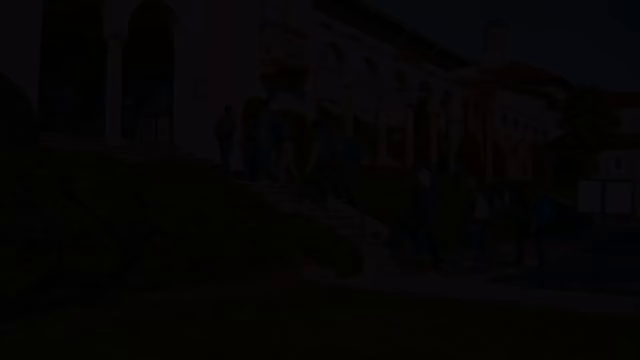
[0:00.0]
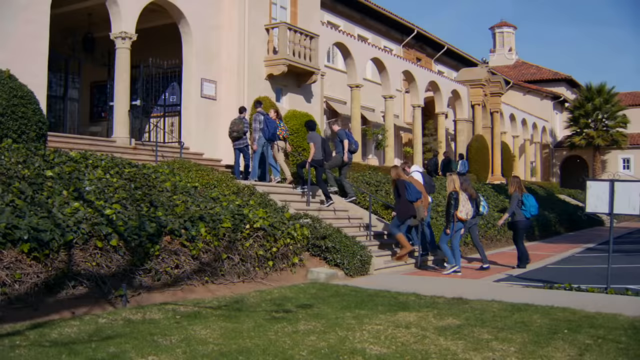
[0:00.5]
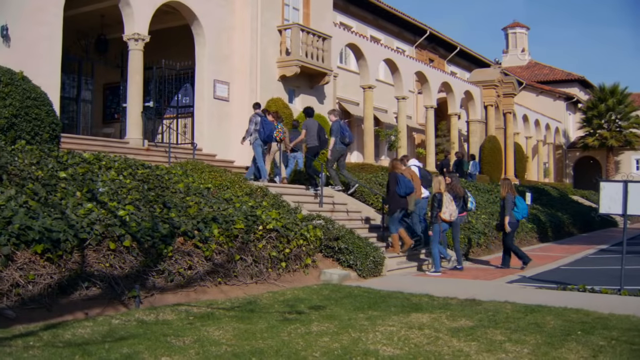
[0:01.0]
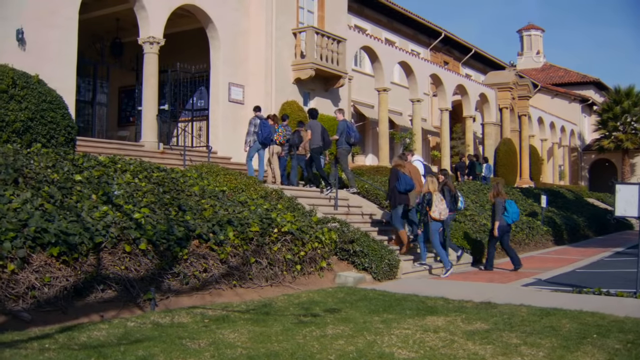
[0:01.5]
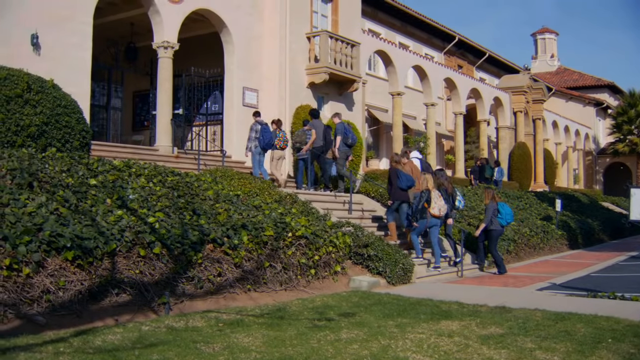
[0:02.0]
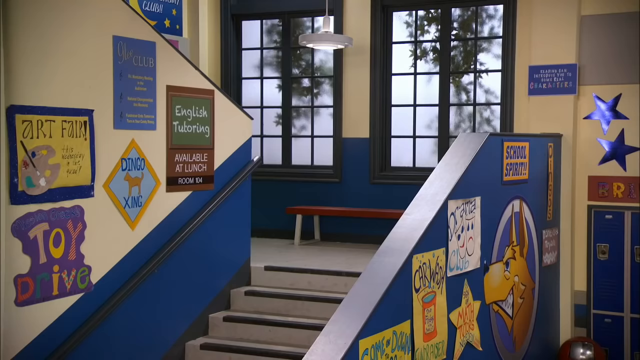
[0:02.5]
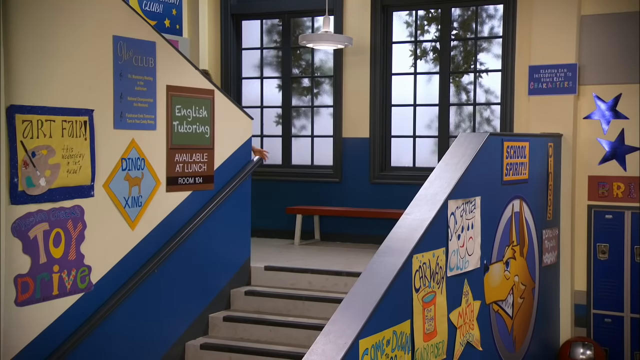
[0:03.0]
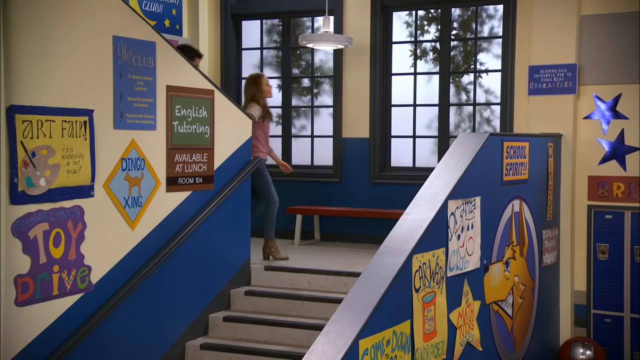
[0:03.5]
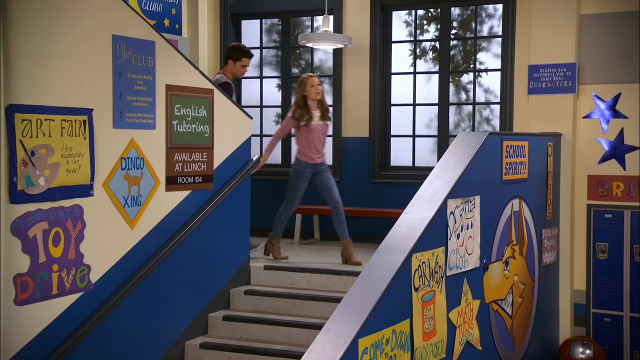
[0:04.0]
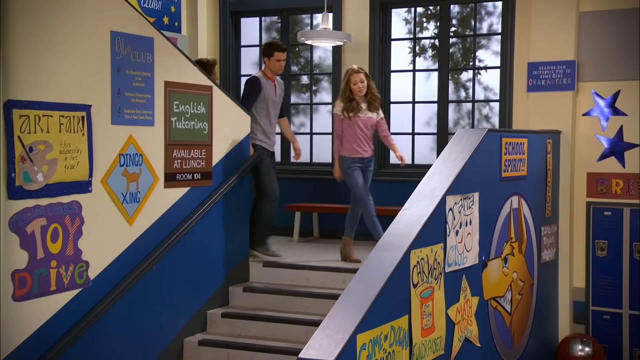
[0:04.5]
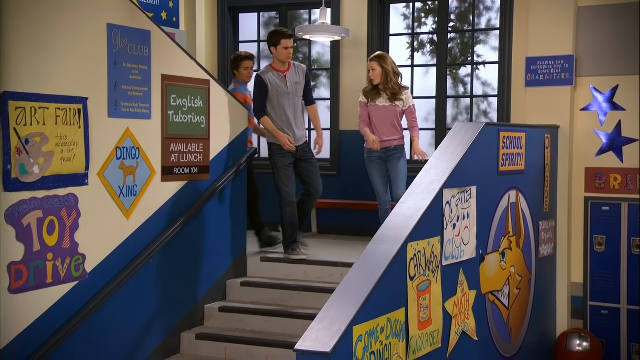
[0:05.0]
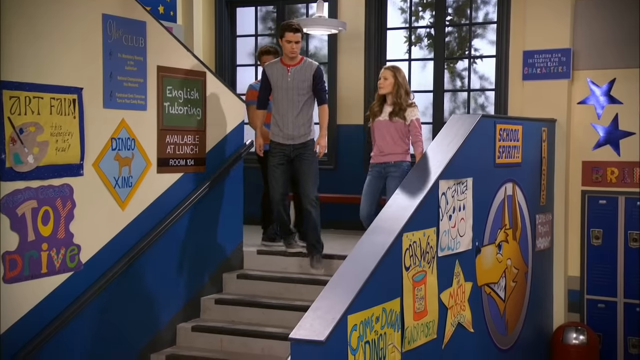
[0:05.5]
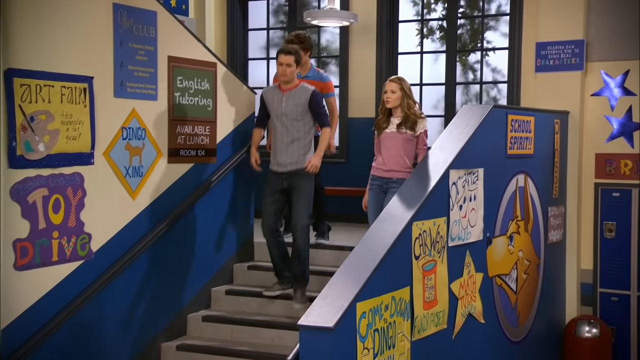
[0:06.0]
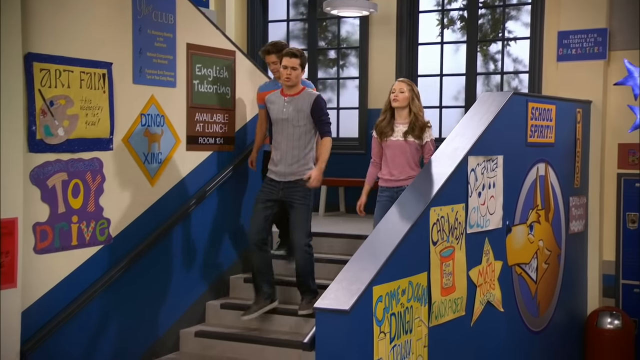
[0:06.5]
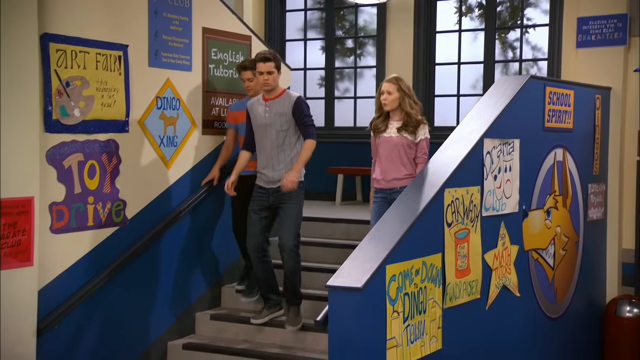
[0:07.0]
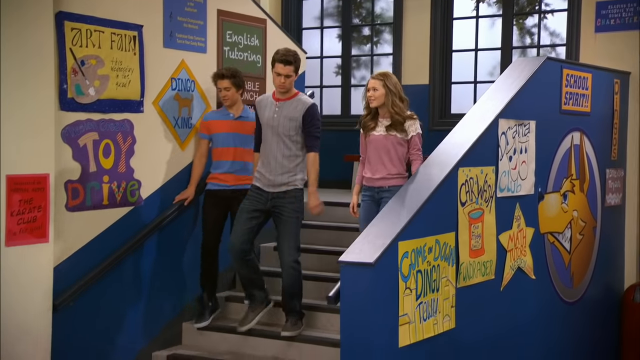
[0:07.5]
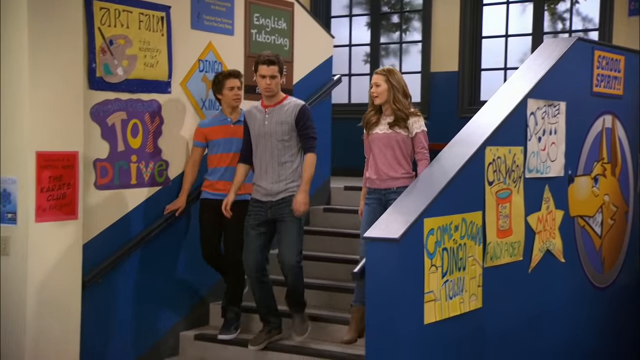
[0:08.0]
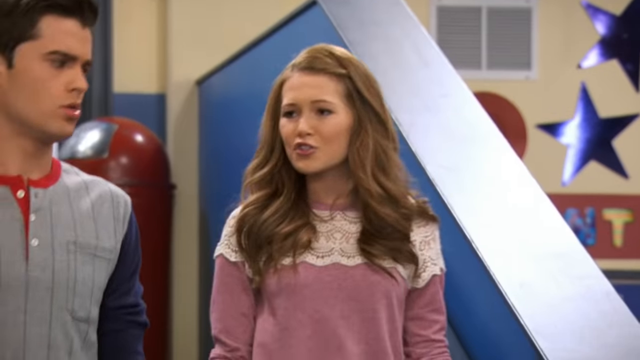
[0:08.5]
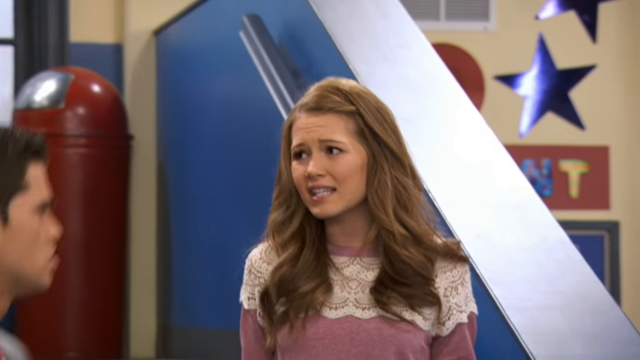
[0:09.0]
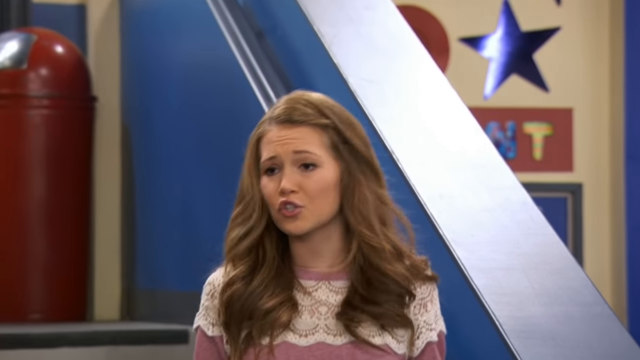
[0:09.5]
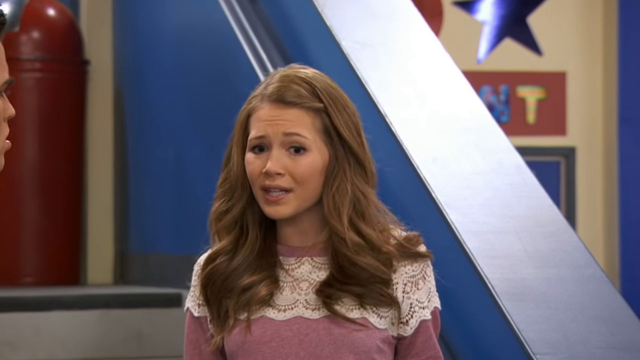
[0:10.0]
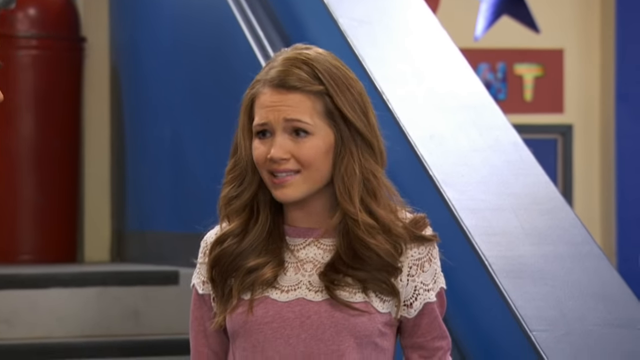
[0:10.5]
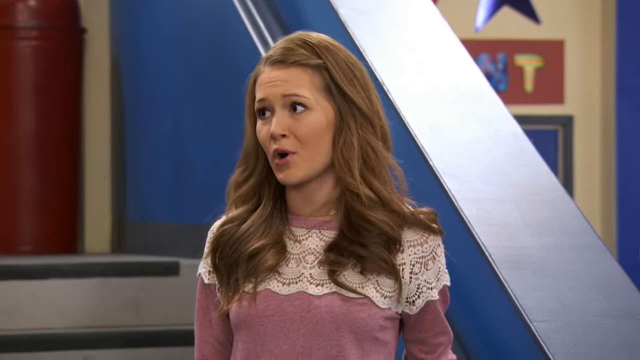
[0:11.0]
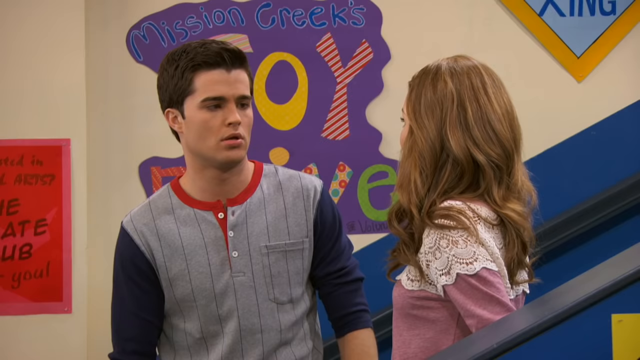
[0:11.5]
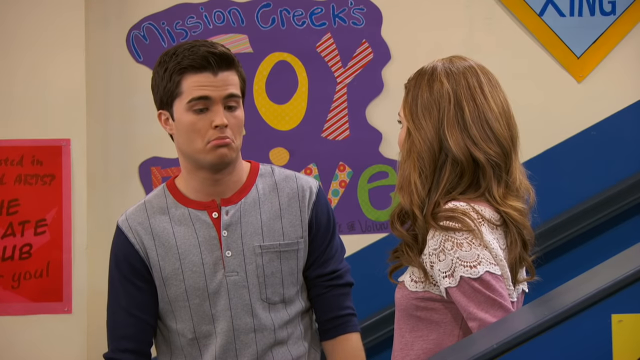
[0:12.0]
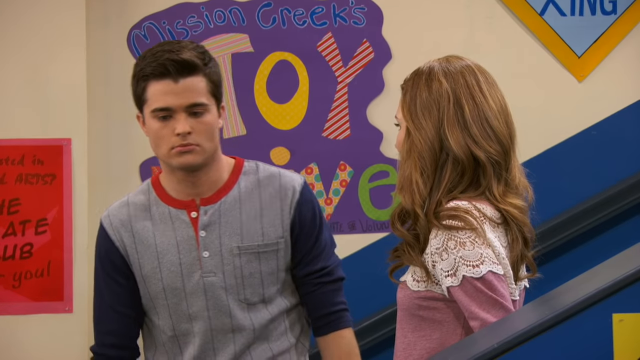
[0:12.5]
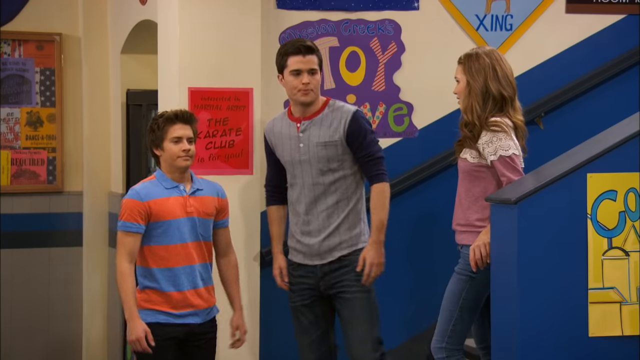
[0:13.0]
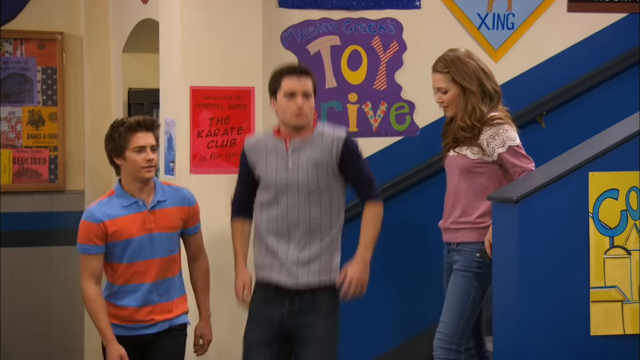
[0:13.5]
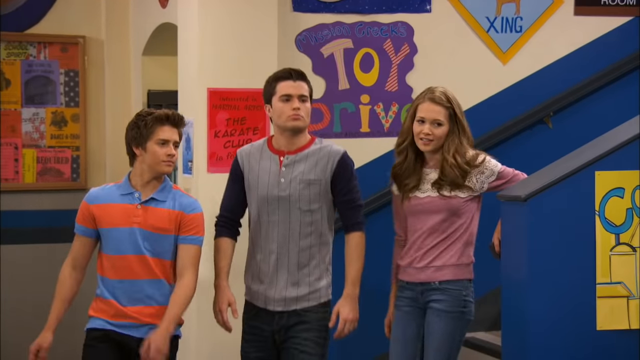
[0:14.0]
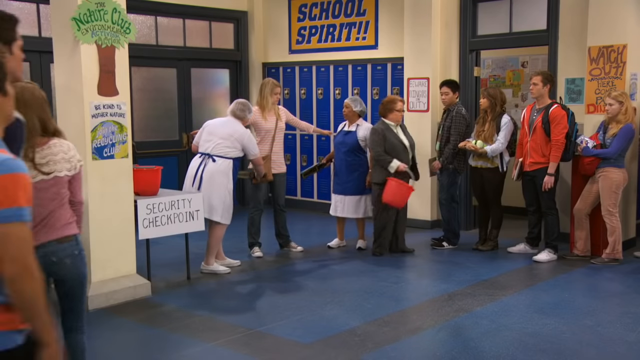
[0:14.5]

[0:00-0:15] This appears to be a clip from a Disney show. A group of young adults, who look like high schoolers, are first seen briefly walking outside on a bright sunny day, and then walking down steps as the setting moves inside. Multiple signs hang on the wall next to them as they walk down the steps; some say "toy drive" and others say "school spirit." The steps are dark gray, the wall is blue and yellow, and there are blue stars in the background. A man, a woman and another man talk to one another as they walk down the steps. The woman wears pink and blue jeans, one man wears a gray shirt and jeans, and the other man wears orange and blue stripes. They then walk over to other people who are standing in the hallway.